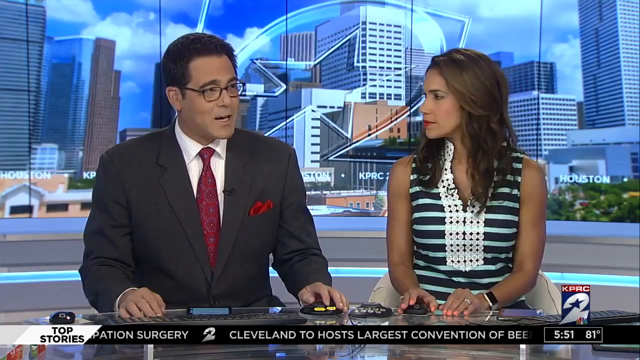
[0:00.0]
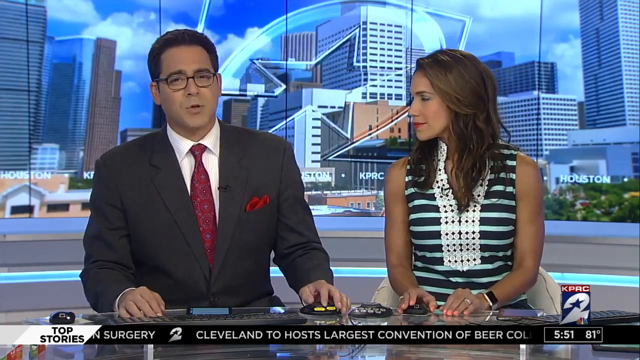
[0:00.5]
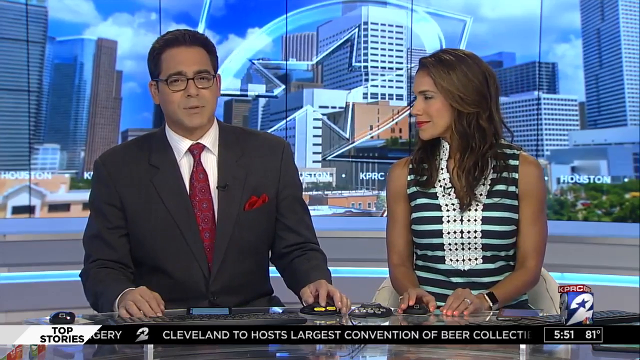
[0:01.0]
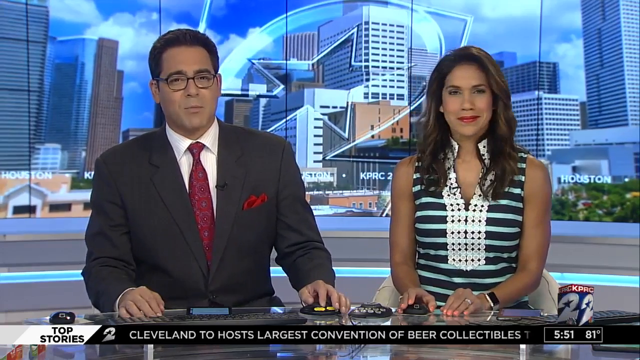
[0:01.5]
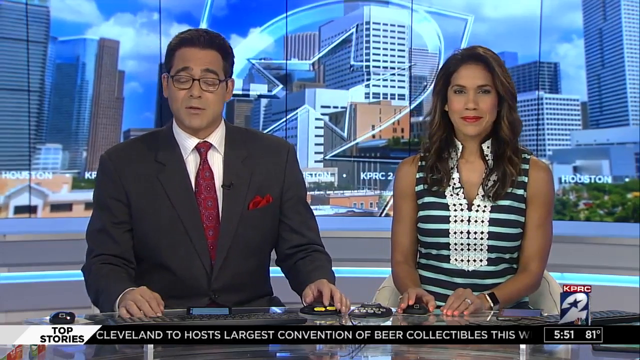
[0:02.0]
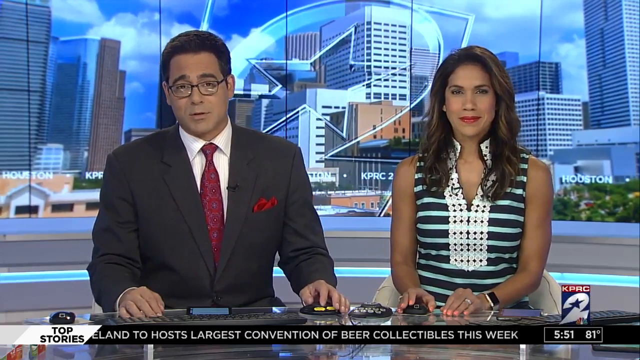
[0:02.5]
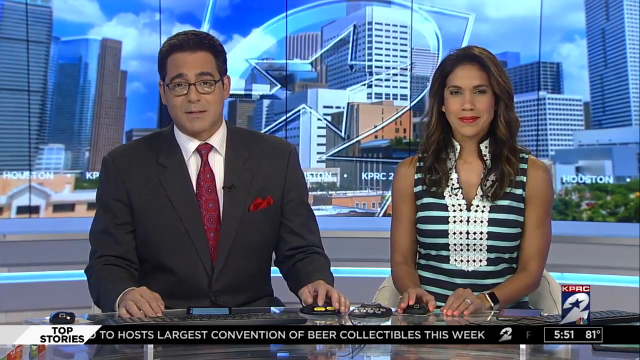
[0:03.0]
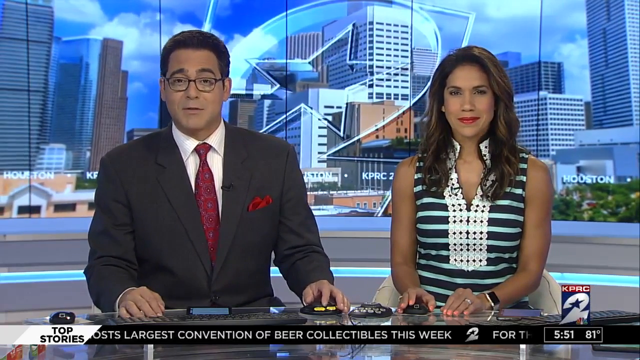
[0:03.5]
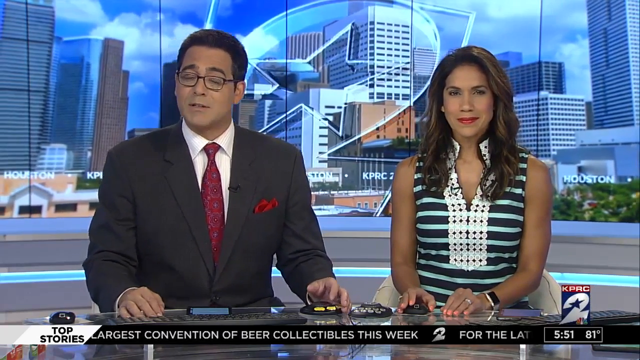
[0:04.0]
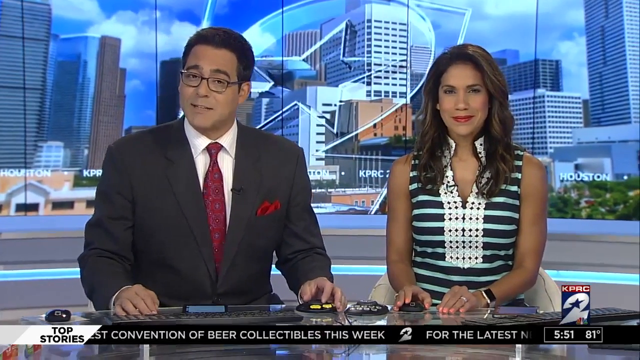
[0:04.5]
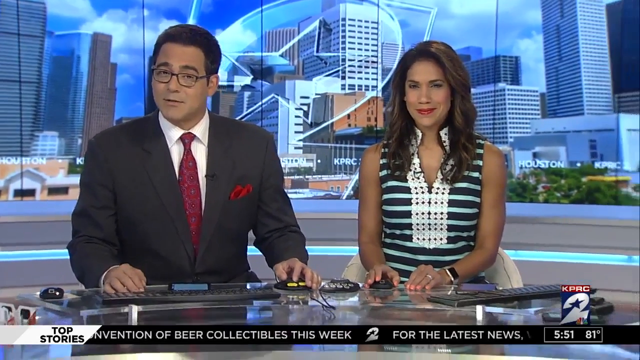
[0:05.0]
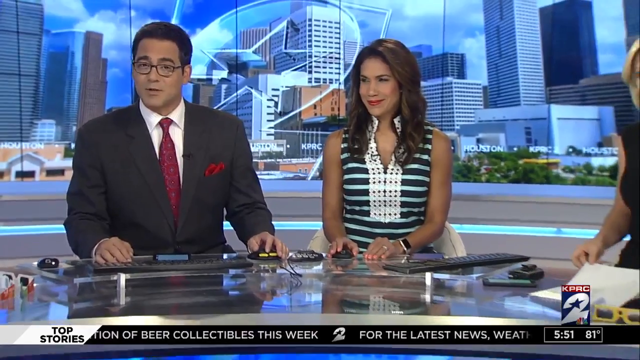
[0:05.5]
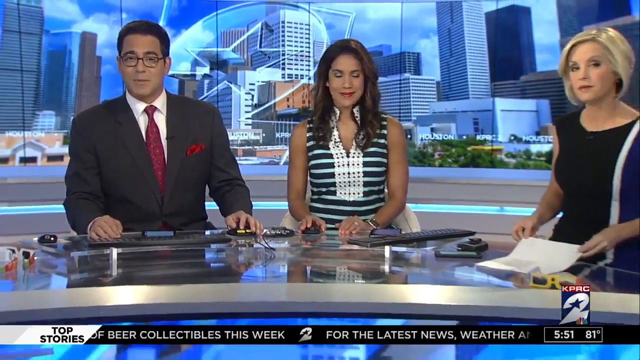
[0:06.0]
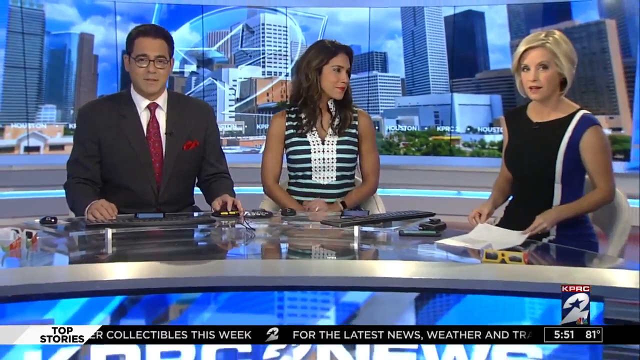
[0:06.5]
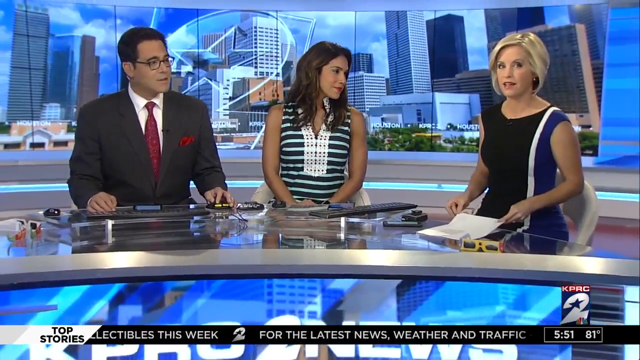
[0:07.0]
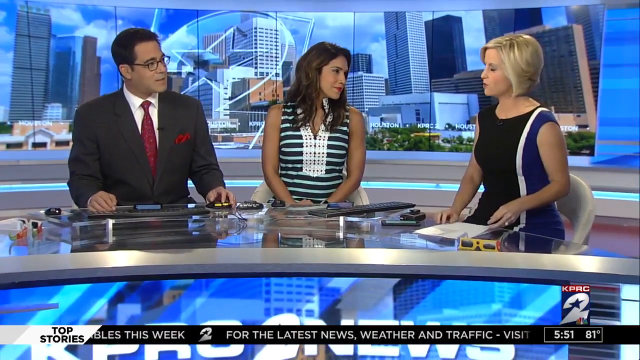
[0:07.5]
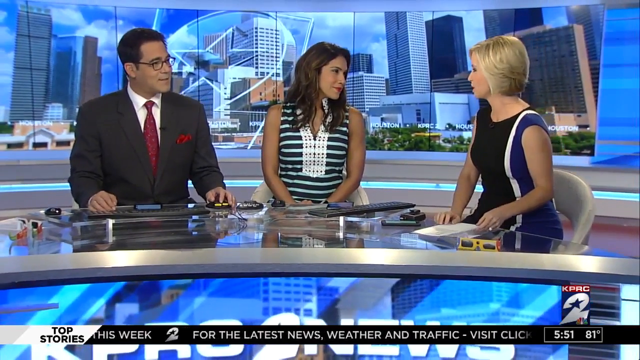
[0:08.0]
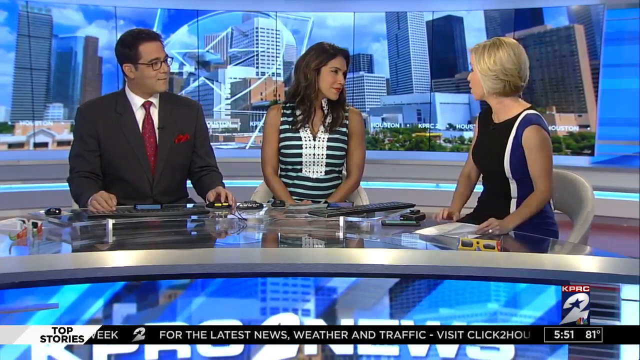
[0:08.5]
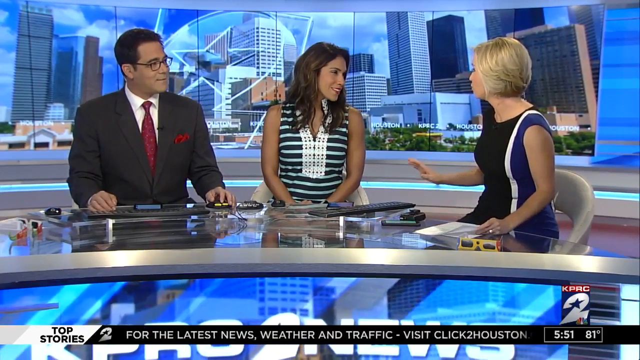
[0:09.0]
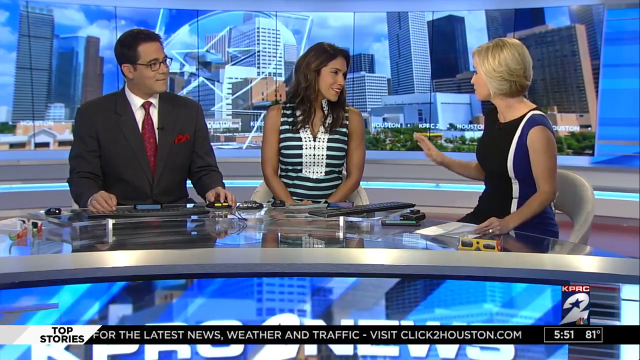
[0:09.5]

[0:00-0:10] The top stories news on KPRC is shown at 5:51 PM, and it is 81 degrees outside. At first there are two people in the newsroom. A lady with long dark hair wears a sleeveless black and white tank top with white designs on the front. On her right side is a gentleman with short dark hair in a black suit, with a ribbon on his pocket and a maroon tie. The tall buildings of a city are in the background, where "Houston" is written along with a circle with a star. The camera then moves to another anchor, a lady with blonde, mid-length hair.